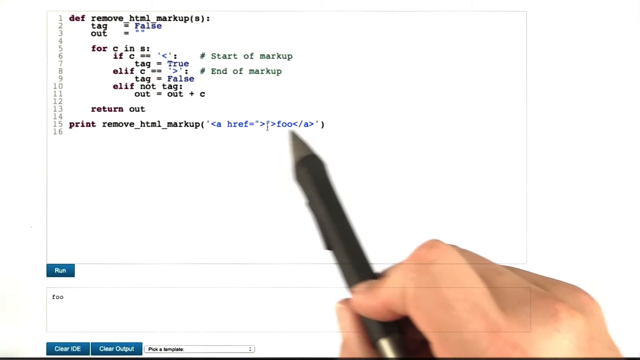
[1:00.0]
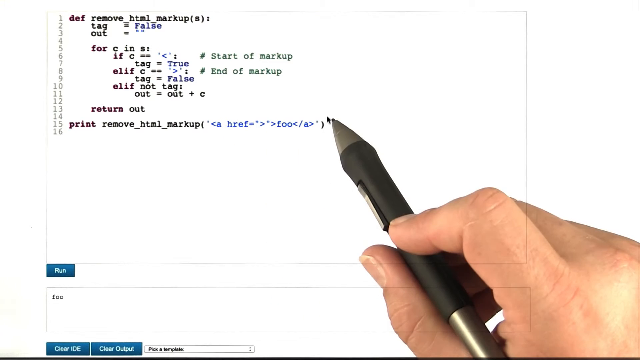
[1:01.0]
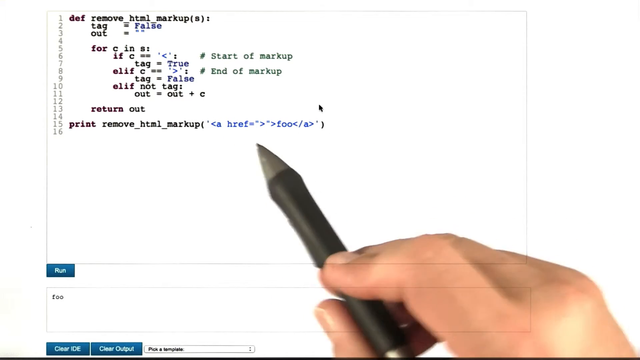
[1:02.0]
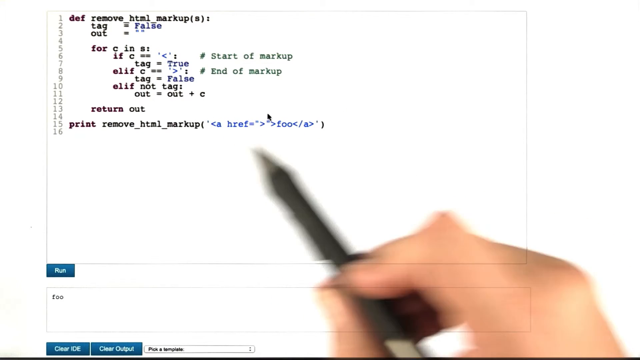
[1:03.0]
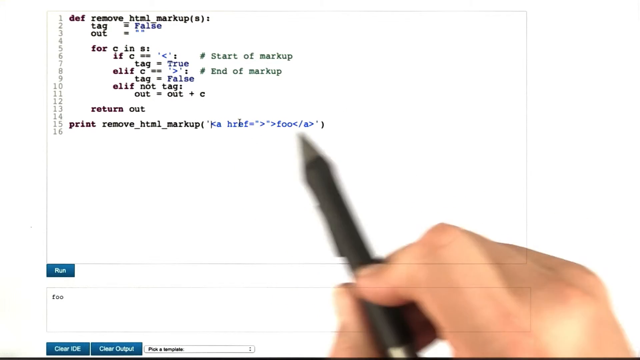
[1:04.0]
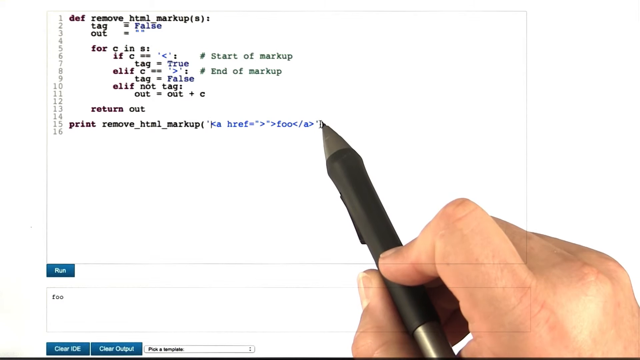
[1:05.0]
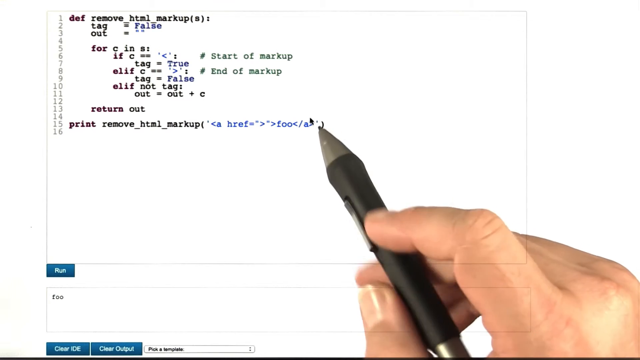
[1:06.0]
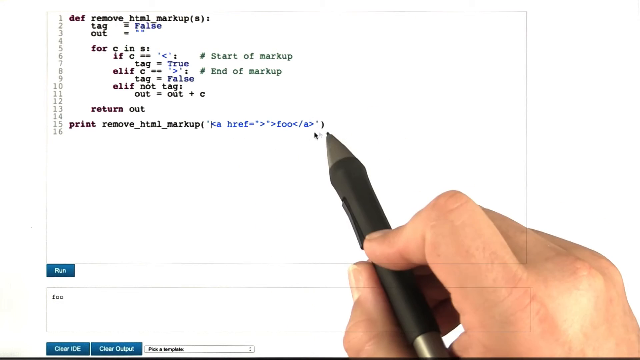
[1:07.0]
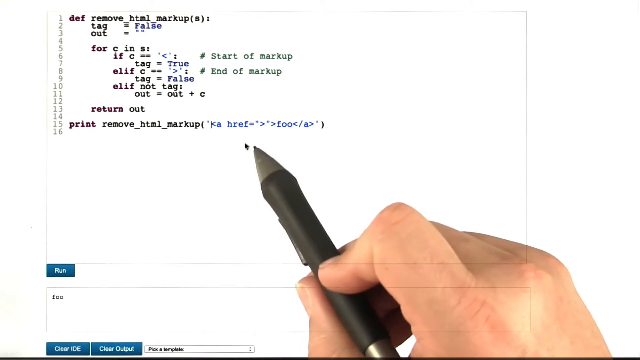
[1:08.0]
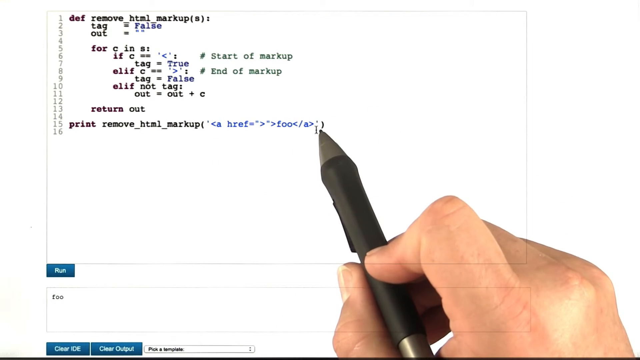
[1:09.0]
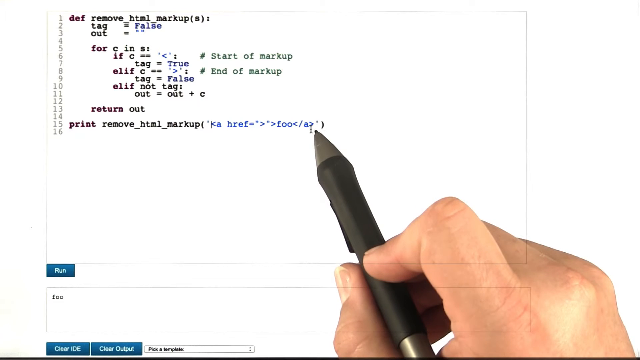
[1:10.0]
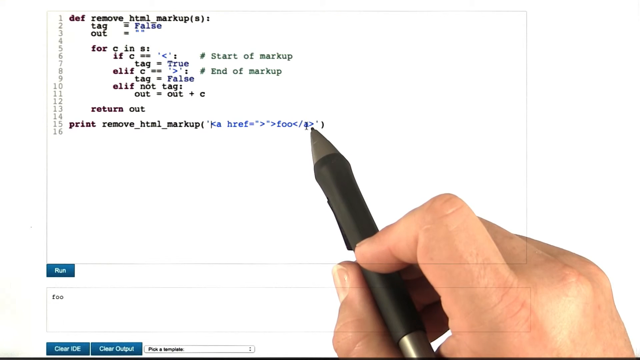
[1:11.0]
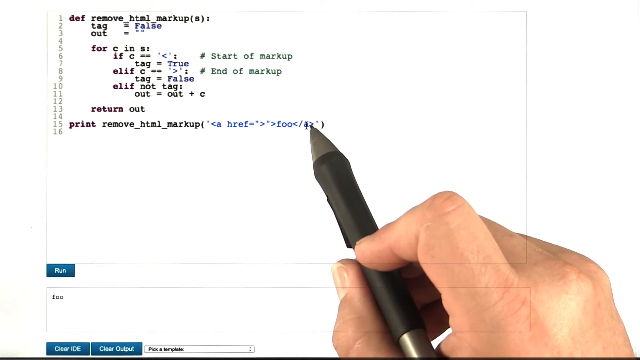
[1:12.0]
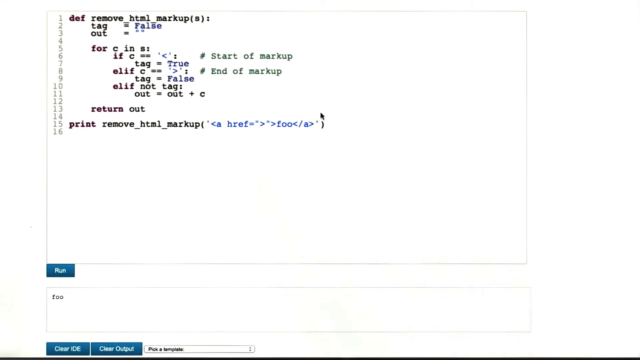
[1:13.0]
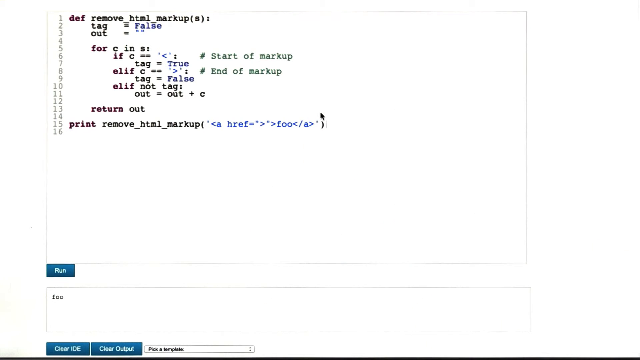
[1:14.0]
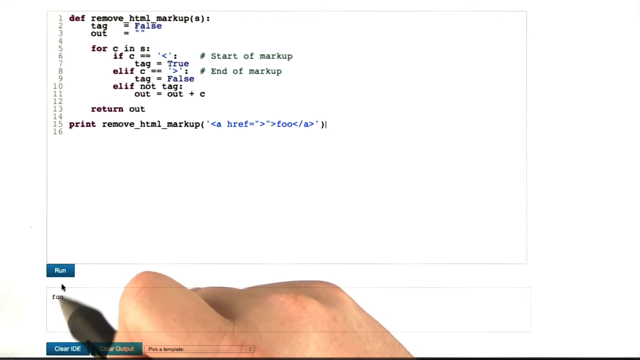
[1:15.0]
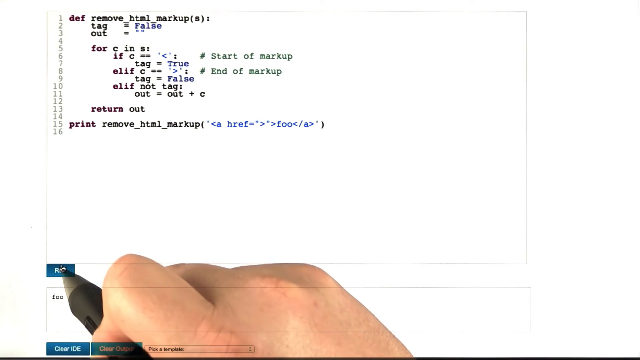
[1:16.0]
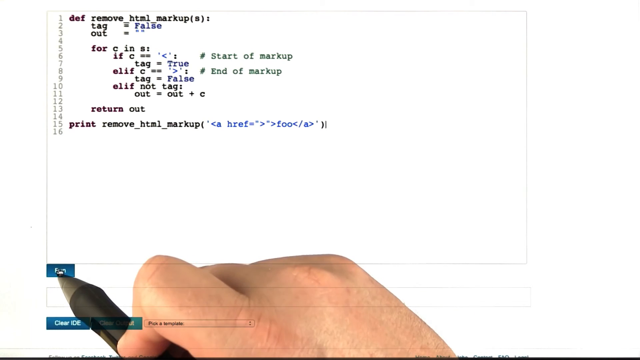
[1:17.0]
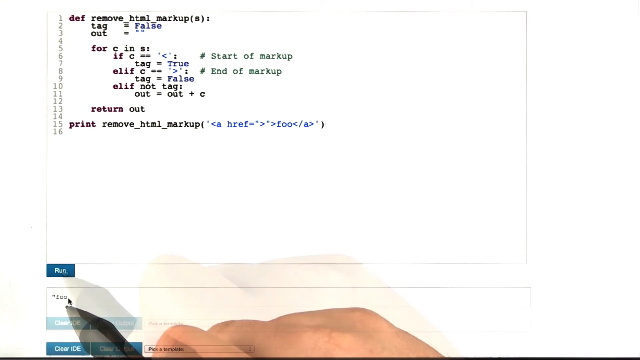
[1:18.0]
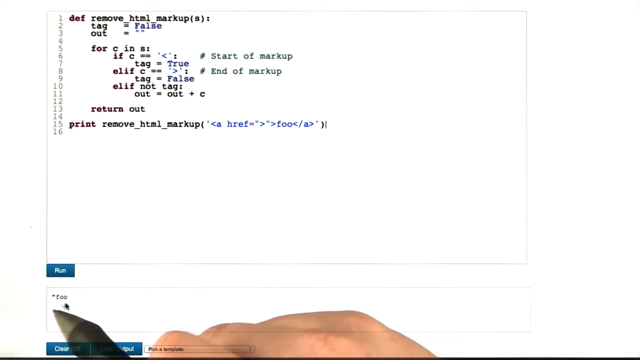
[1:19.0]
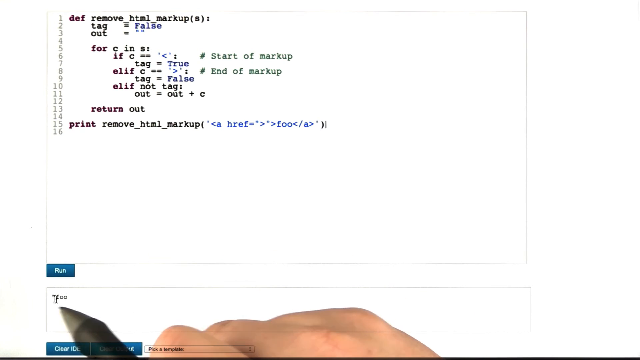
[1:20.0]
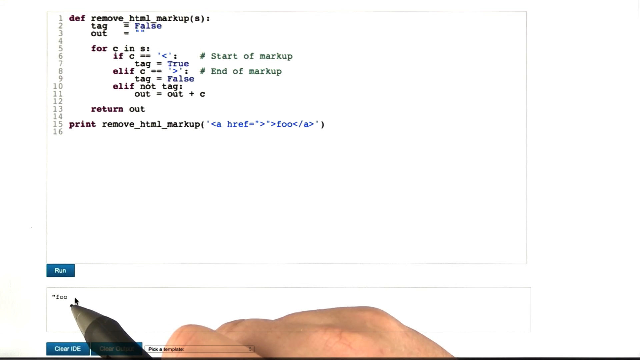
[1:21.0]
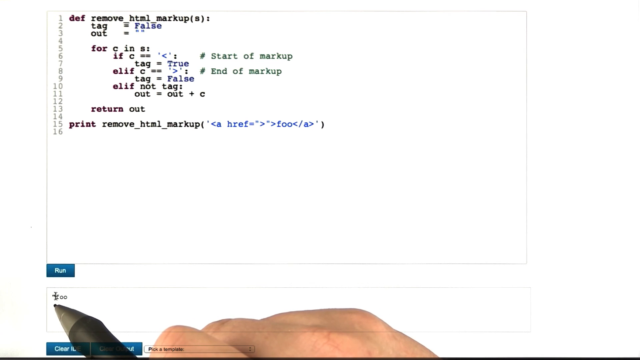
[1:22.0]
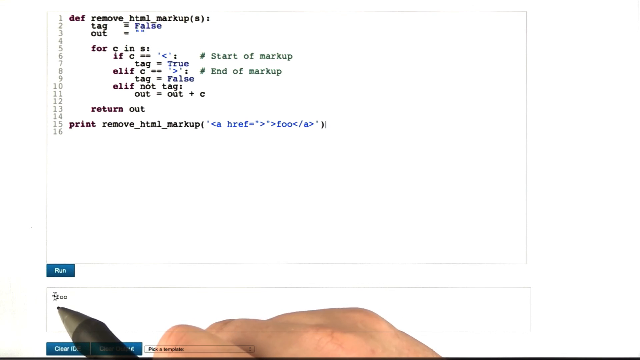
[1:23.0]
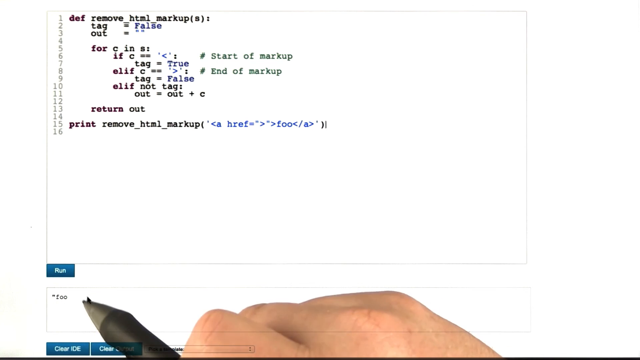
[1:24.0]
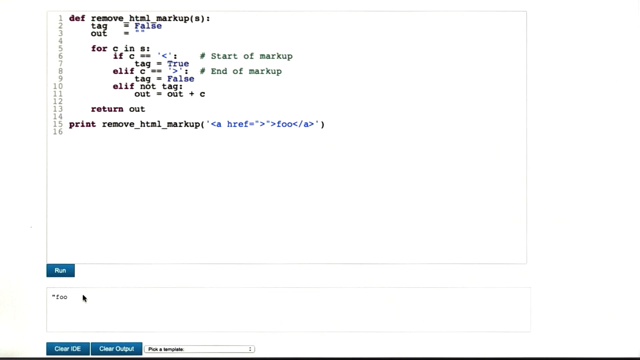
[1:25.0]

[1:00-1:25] Text about the program appears, including "print", "remove html" and "markup". The person is writing code using HTML, with "remove html markup tags" and the tags visible. The person then writes "for c in s", then "if c", along with a lot of other code.